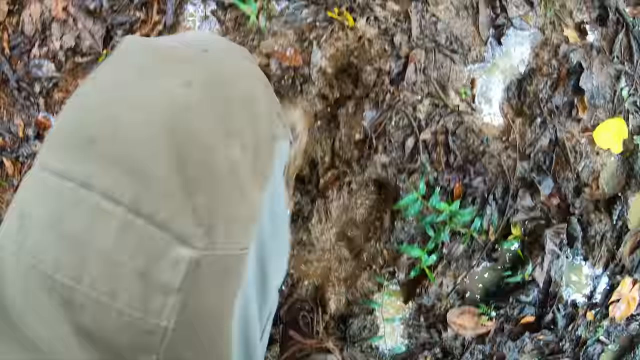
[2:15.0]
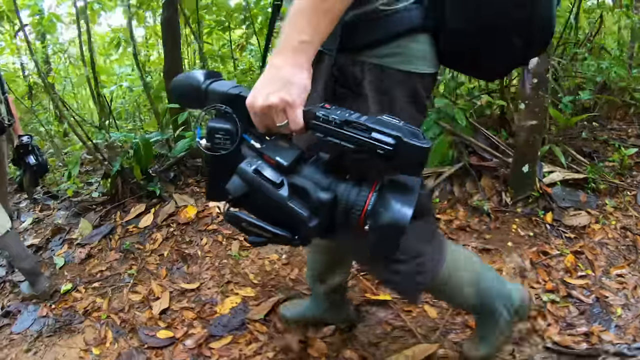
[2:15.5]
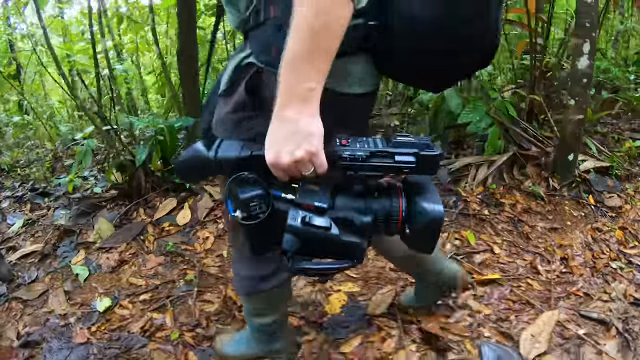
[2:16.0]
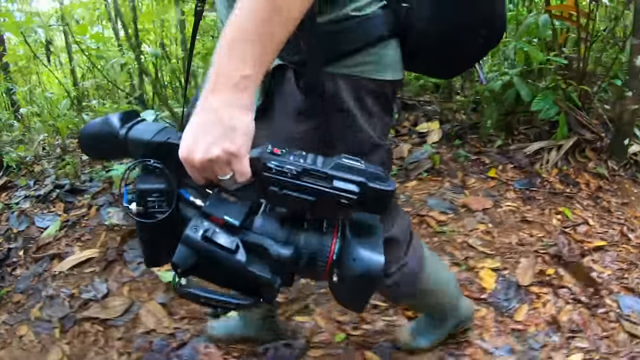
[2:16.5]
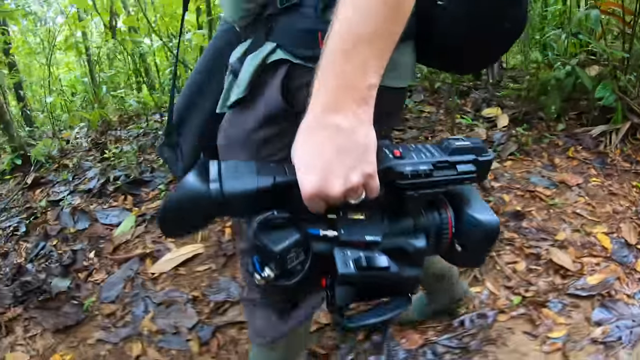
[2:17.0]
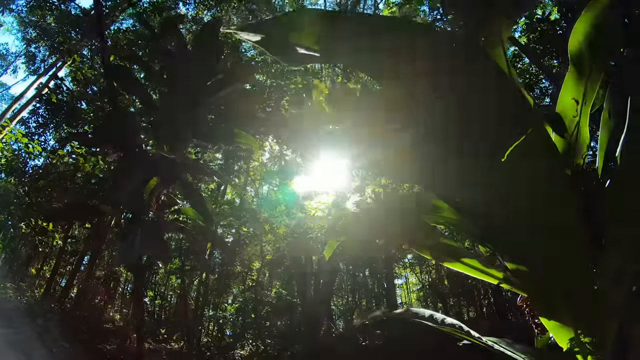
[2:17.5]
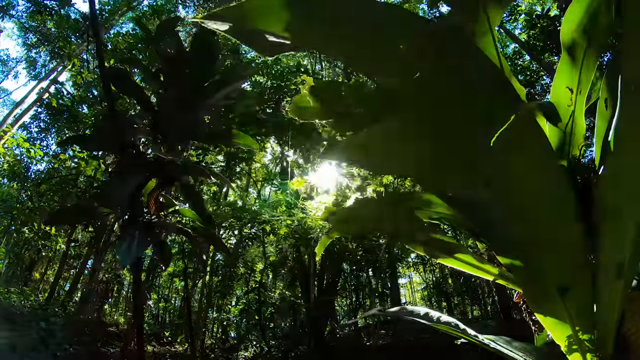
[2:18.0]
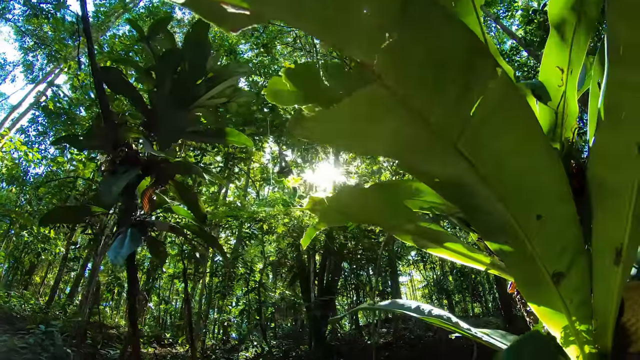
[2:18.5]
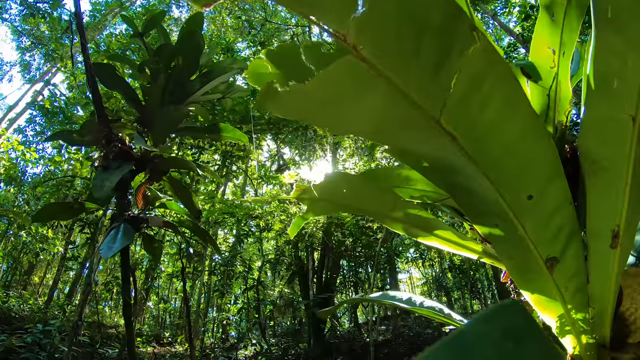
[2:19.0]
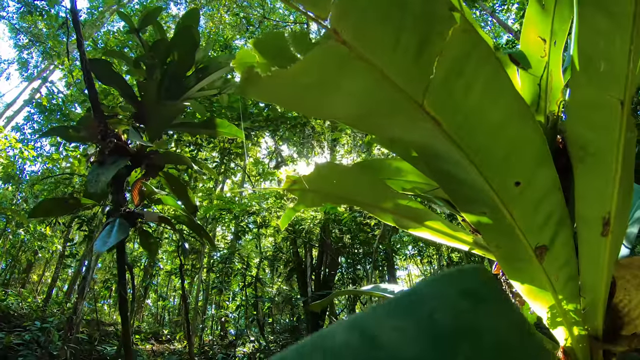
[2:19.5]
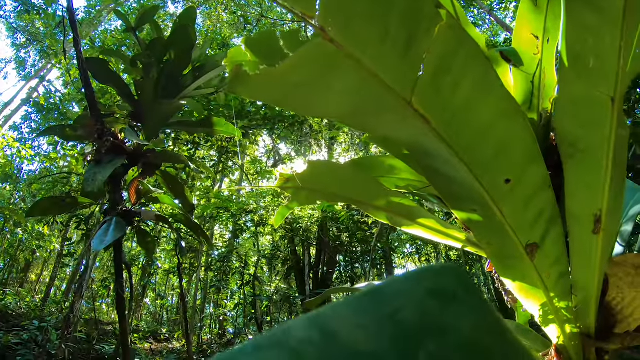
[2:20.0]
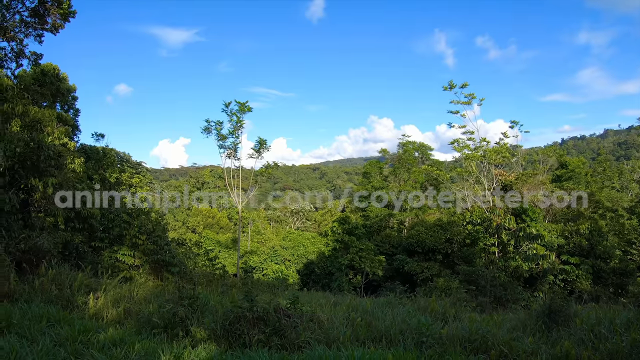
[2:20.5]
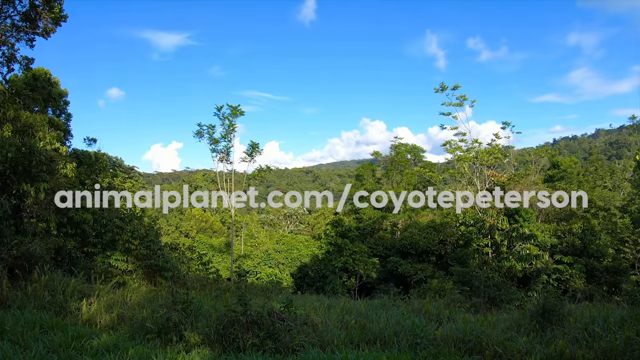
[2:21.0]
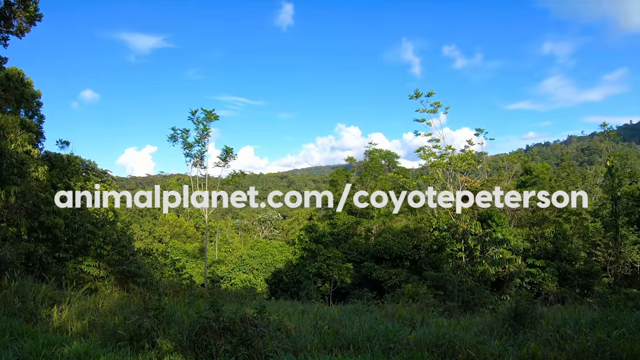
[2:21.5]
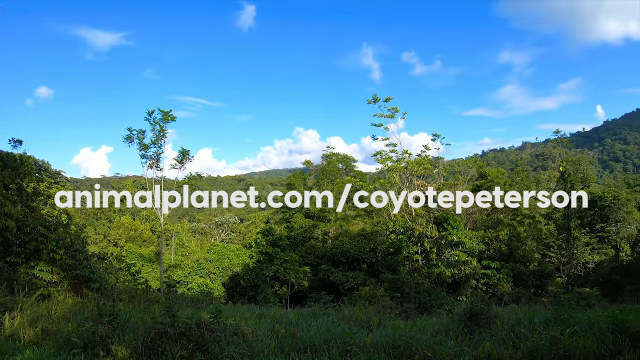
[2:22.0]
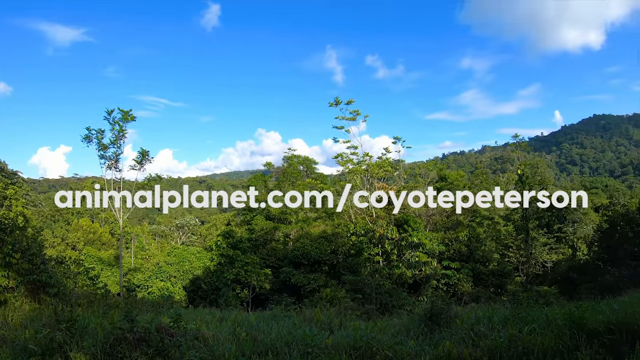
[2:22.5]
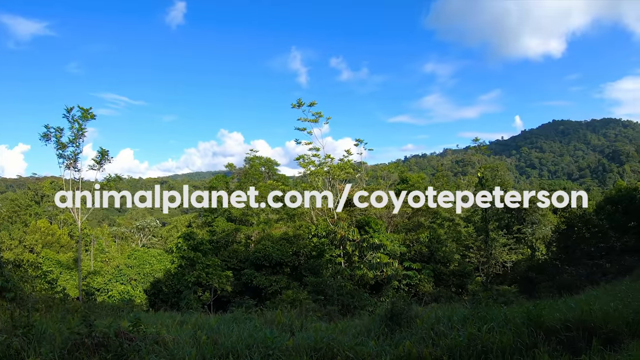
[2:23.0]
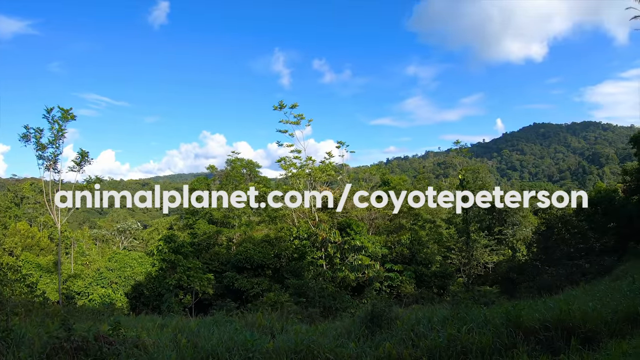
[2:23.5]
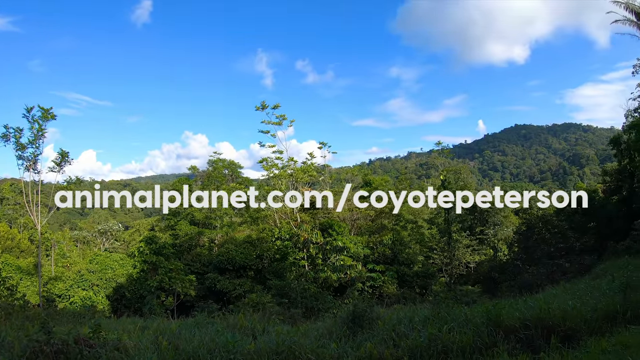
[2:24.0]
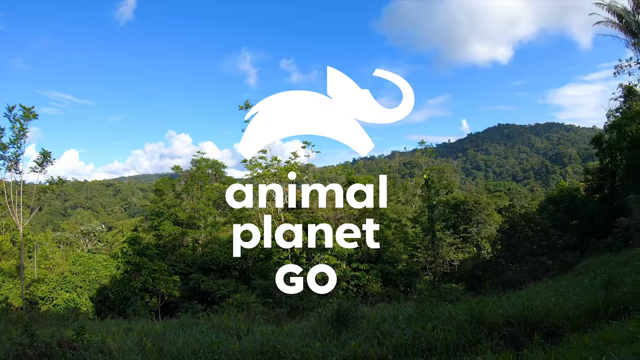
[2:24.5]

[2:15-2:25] A documentary crew holds their gear, such as a video camera, and walks along different types of paths, wet and dry. The crew appears to be the same as, or very similar to, the one seen earlier. Lush, green, very leafy environments are shown, with the sun shining through the treetops and clear skies; it seems to be warm, maybe a forest or a jungle. Then text for a website appears: "animalplanet.com/coyotepeterson". It changes to the Animal Planet logo, white with the silhouette of an elephant, with the words "Animal Planet Go" under it.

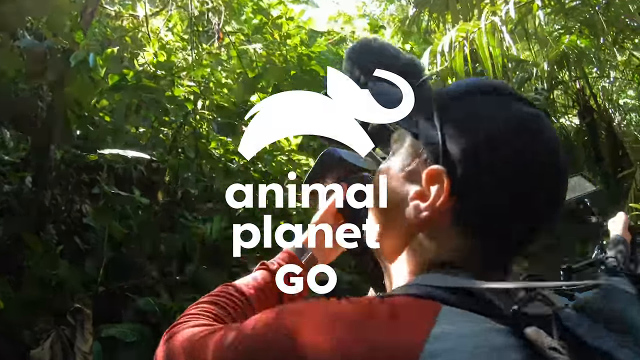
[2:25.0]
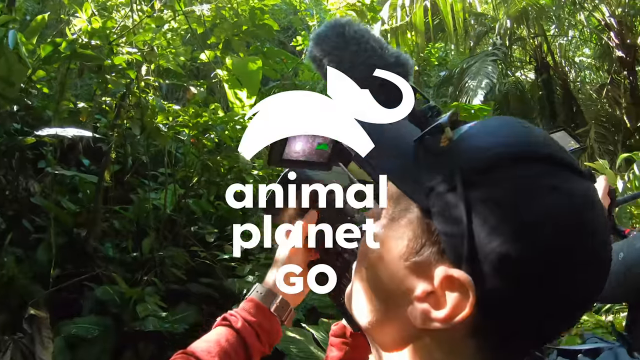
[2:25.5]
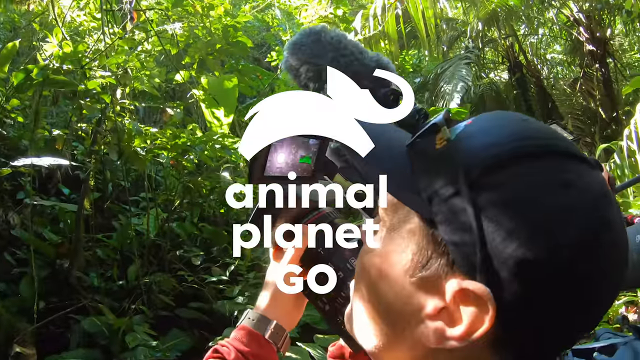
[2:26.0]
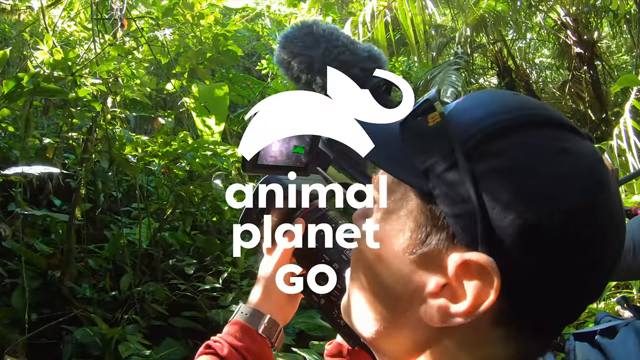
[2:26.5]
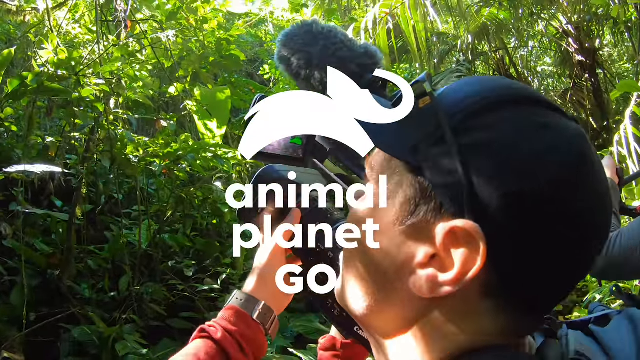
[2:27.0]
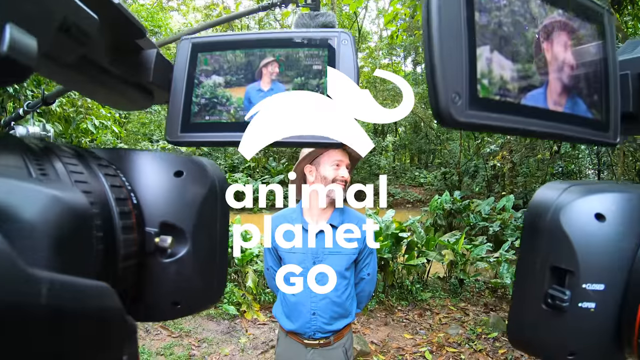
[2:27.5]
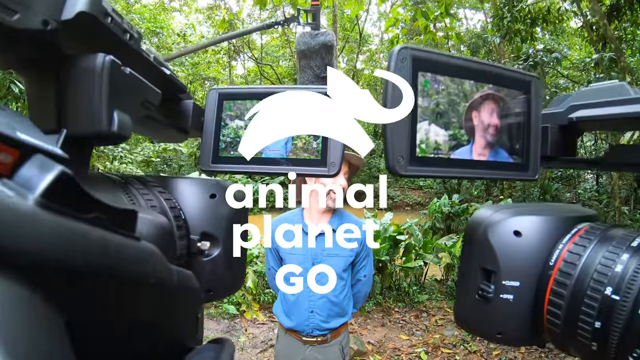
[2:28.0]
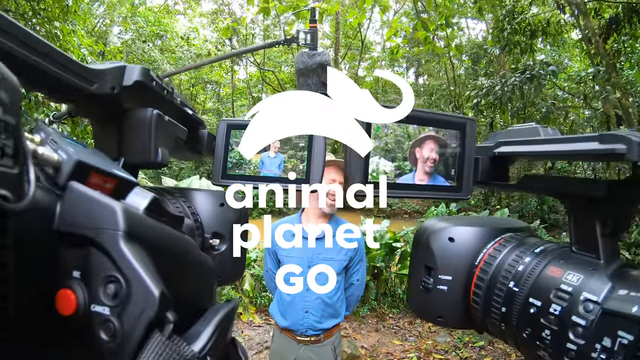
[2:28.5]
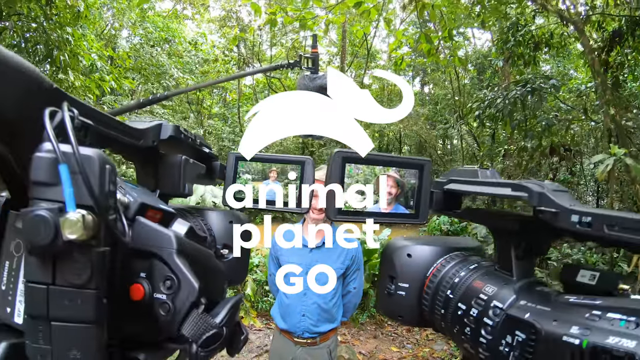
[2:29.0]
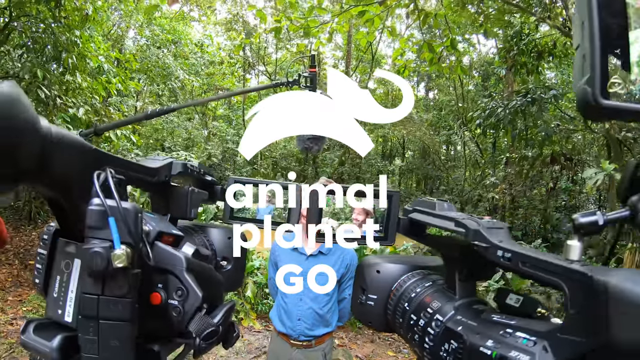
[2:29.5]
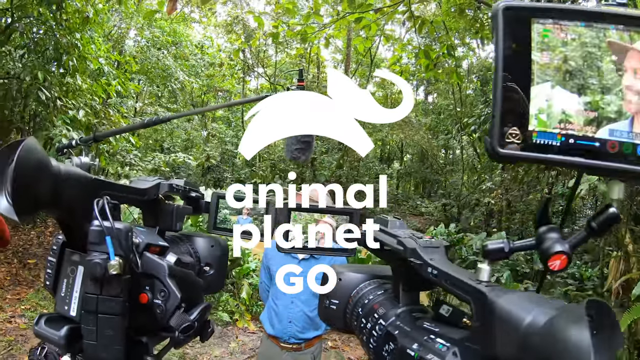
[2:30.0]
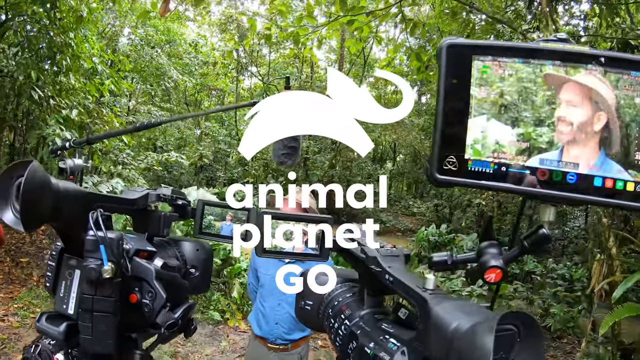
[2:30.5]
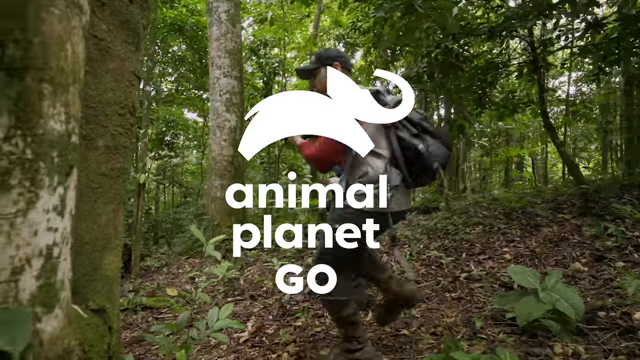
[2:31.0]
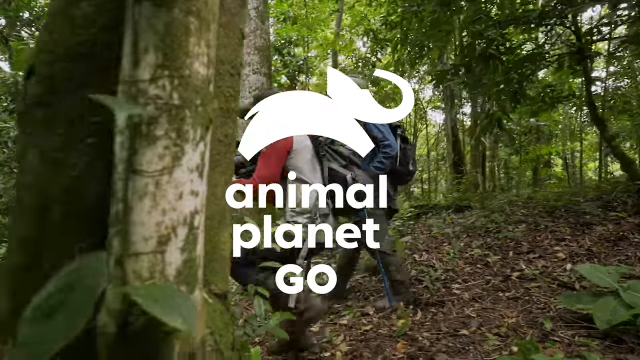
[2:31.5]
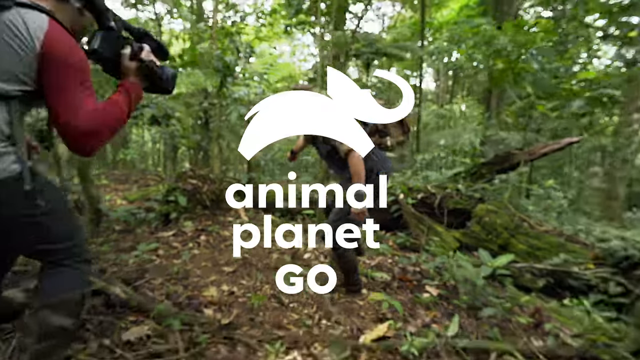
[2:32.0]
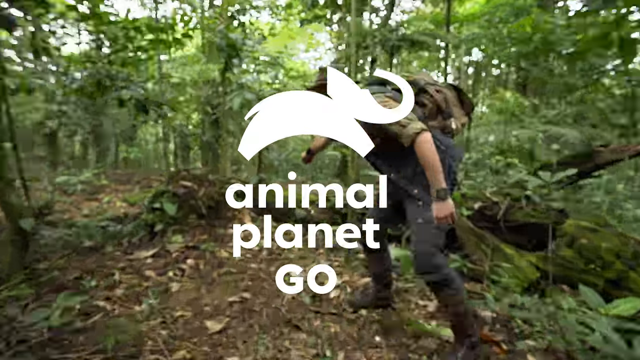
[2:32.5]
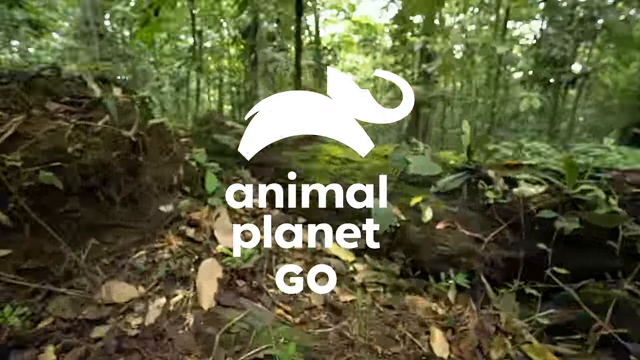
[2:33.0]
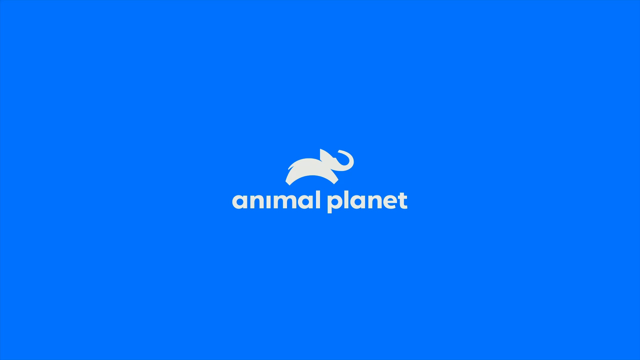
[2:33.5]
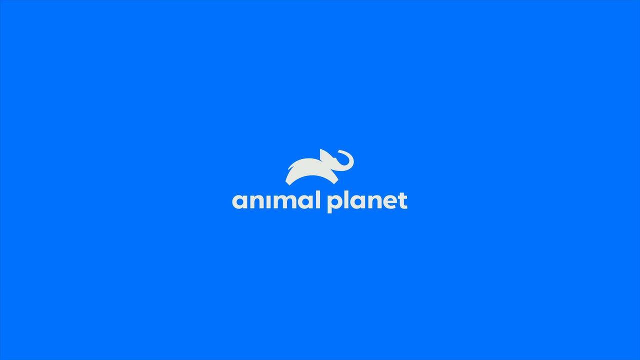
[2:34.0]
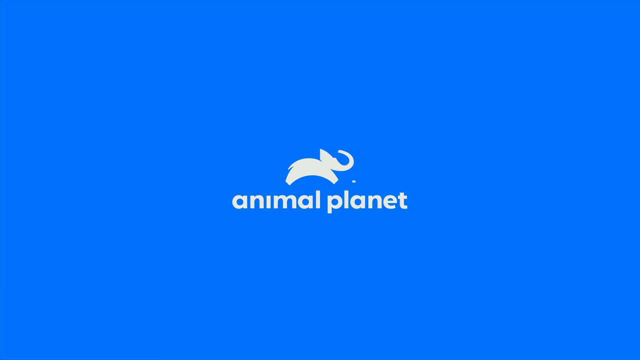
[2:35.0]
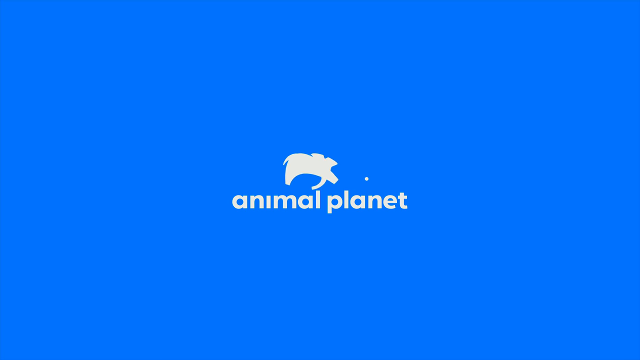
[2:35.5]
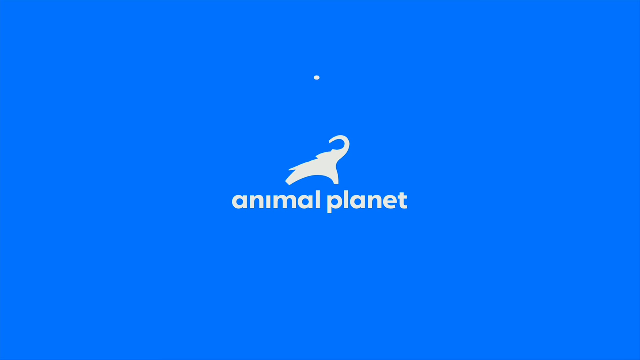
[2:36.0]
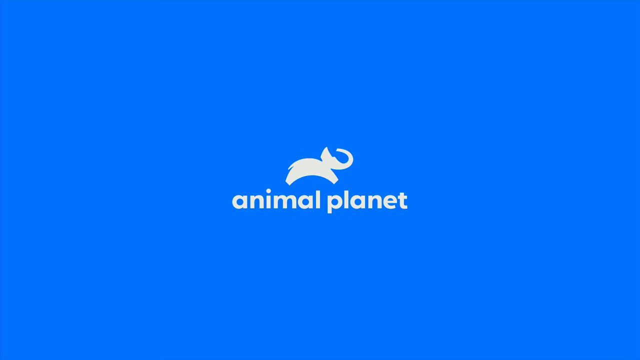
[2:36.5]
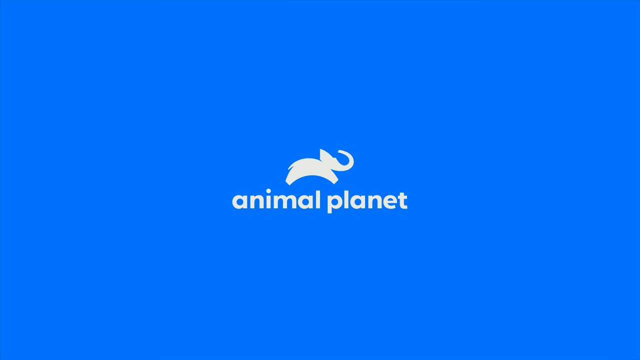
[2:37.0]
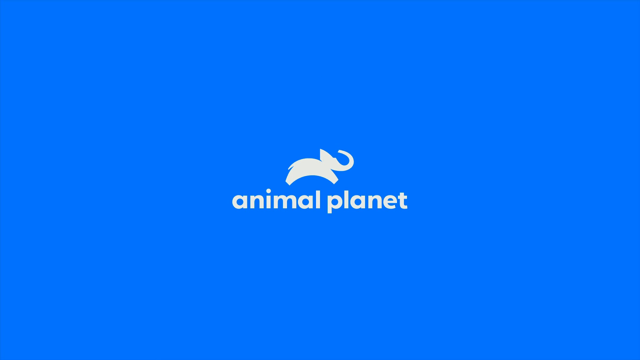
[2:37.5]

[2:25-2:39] The Animal Planet logo, a white elephant silhouette with the words "Animal Planet go" below it, is on screen. In the shots behind the logo, a documentary crew holds cameras, and the cameras are pointed at what would be the main host of the show. The host wears a blue shirt and some sort of hat and stands in front of a very lush, green, leafy environment that might be a forest or a jungle, with cameras and a microphone pointed at him. Then the Animal Planet logo appears on a blue background, with the elephant silhouette starting to move.